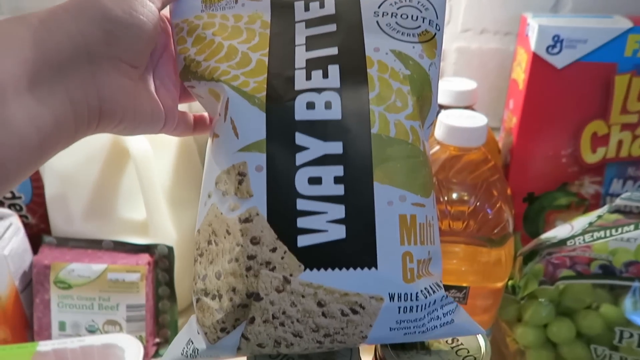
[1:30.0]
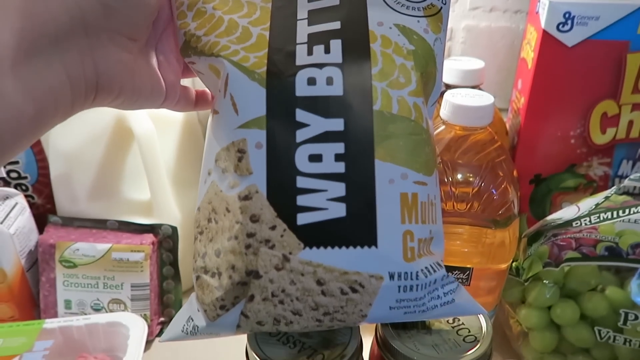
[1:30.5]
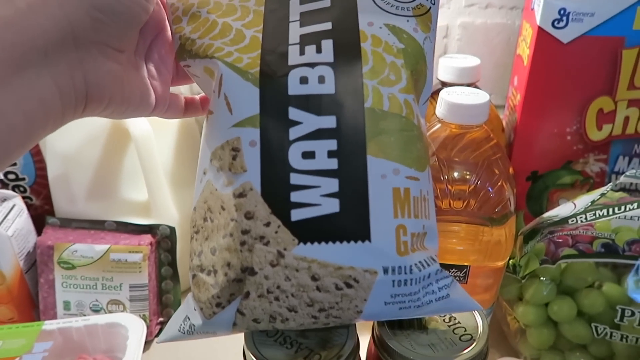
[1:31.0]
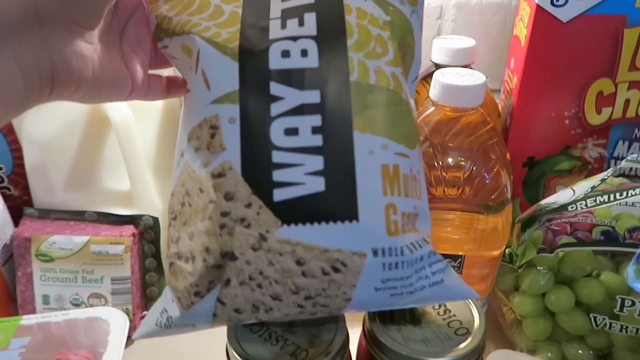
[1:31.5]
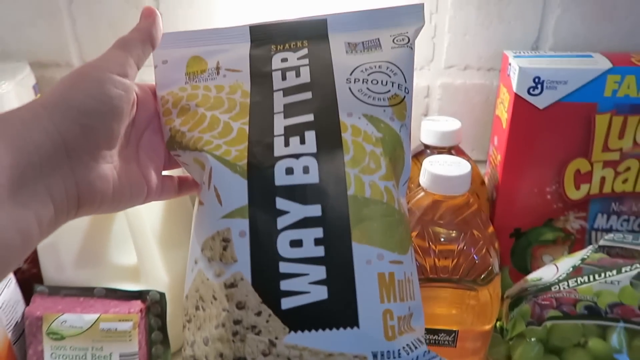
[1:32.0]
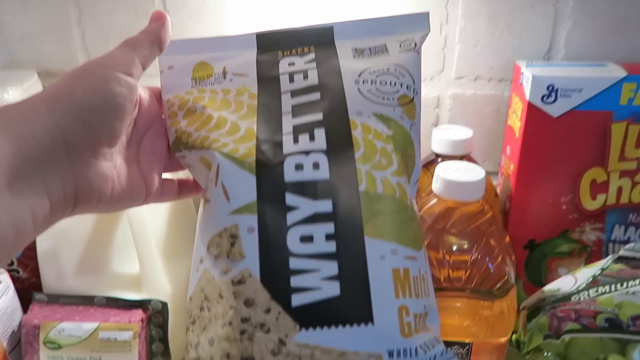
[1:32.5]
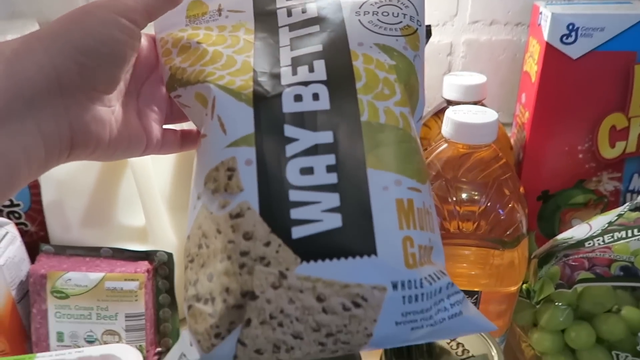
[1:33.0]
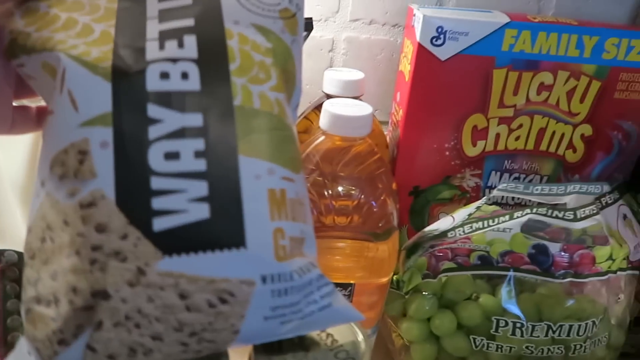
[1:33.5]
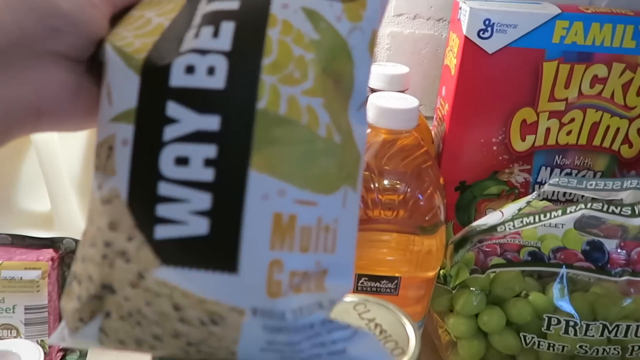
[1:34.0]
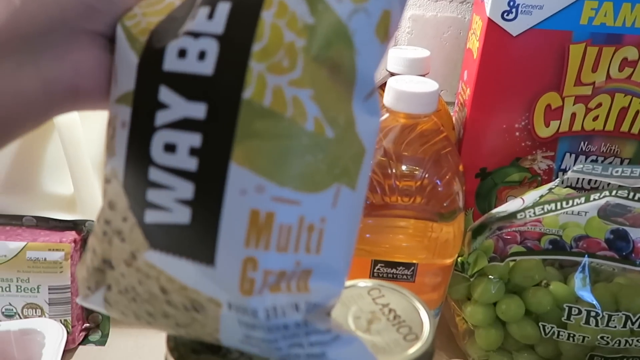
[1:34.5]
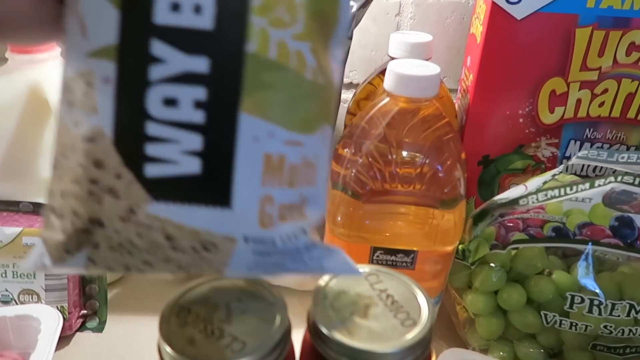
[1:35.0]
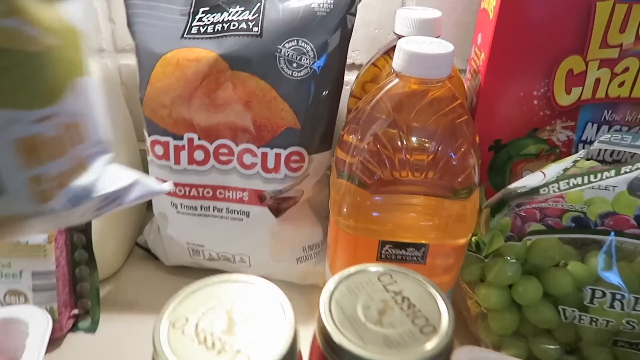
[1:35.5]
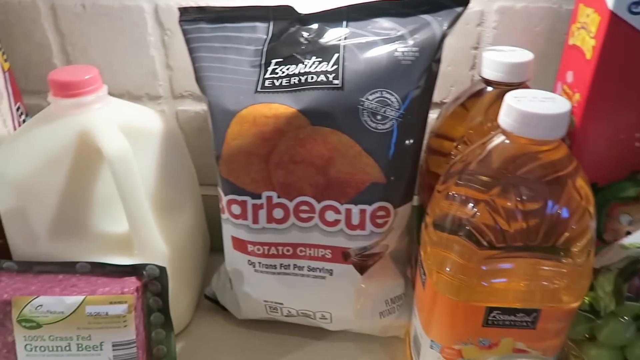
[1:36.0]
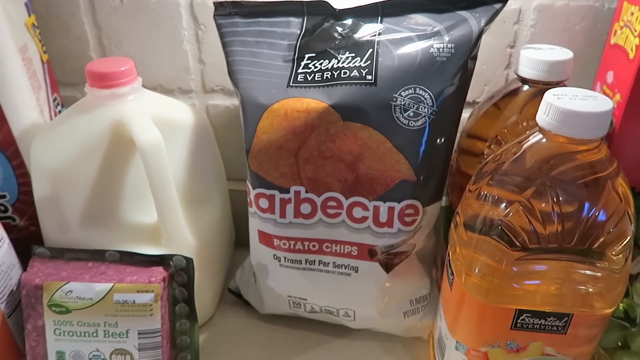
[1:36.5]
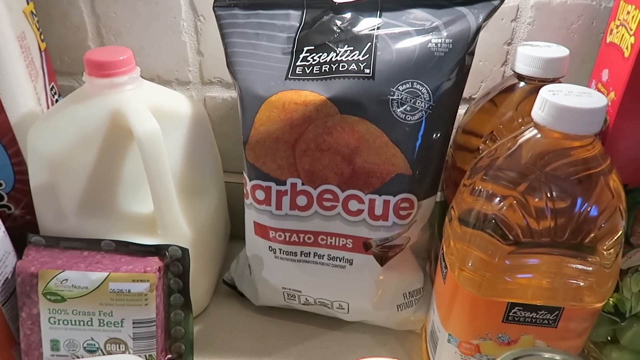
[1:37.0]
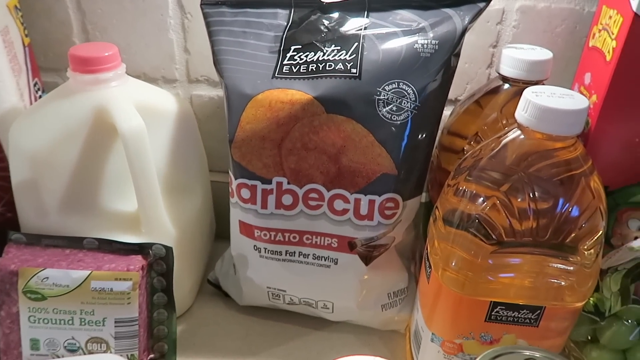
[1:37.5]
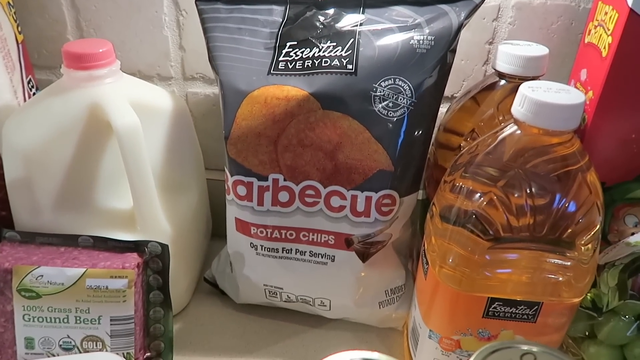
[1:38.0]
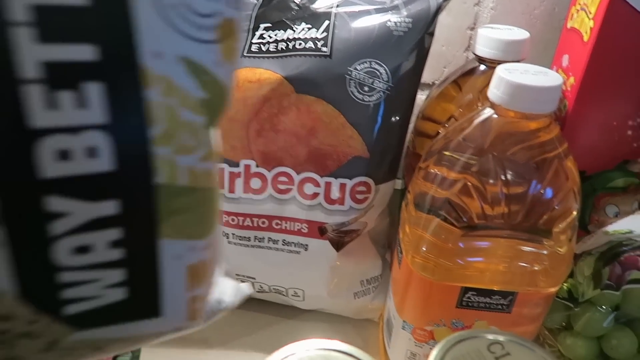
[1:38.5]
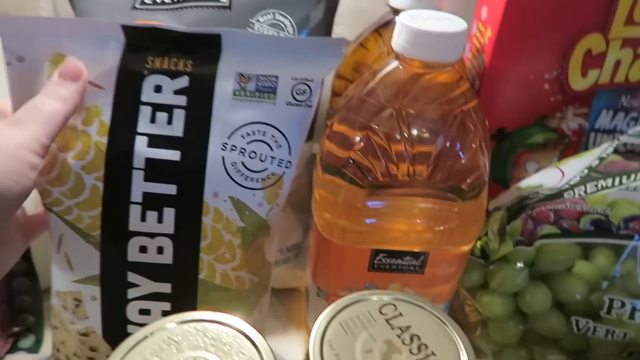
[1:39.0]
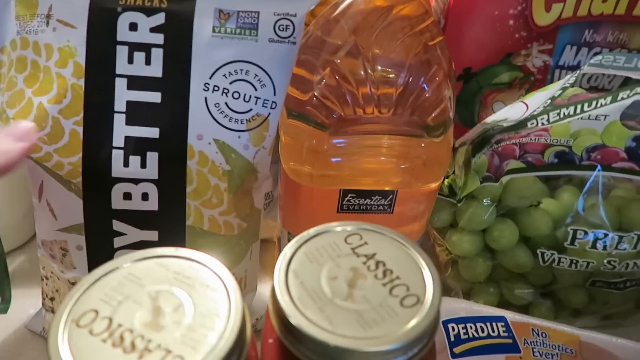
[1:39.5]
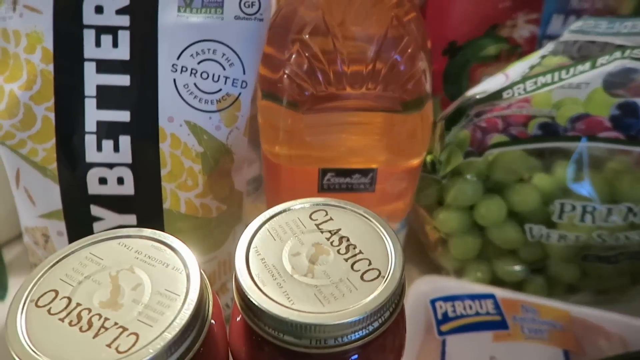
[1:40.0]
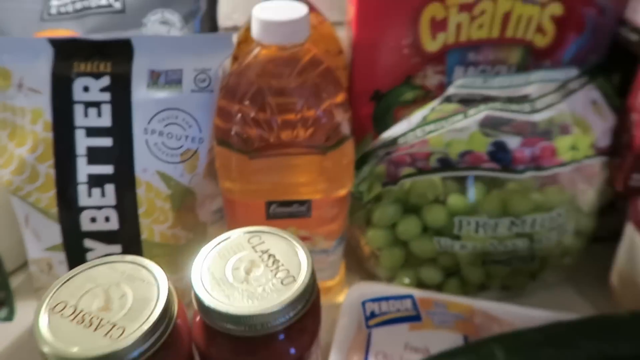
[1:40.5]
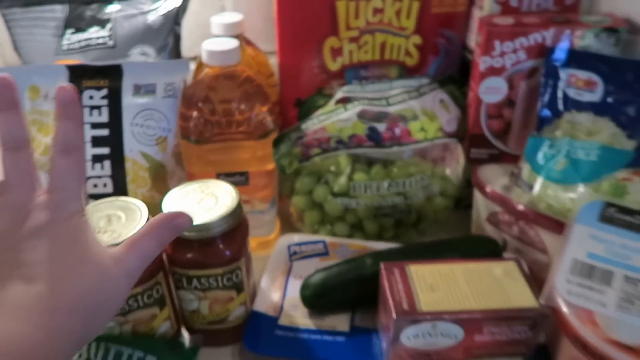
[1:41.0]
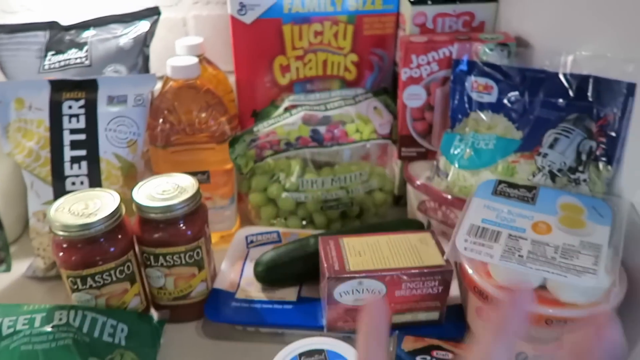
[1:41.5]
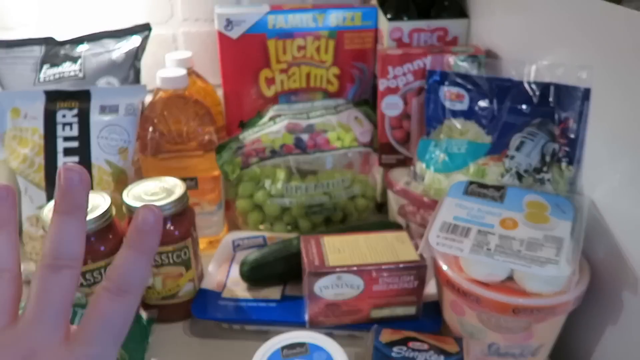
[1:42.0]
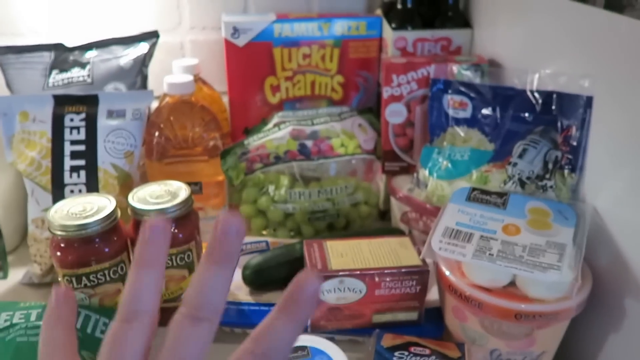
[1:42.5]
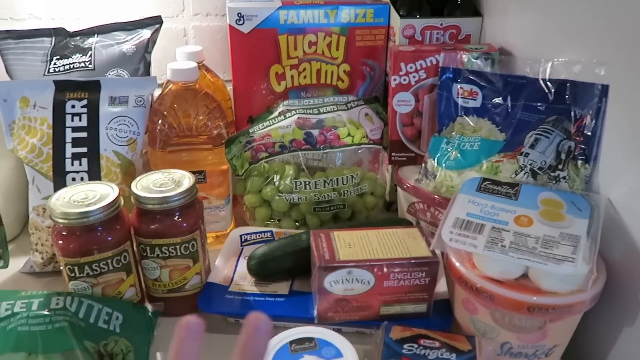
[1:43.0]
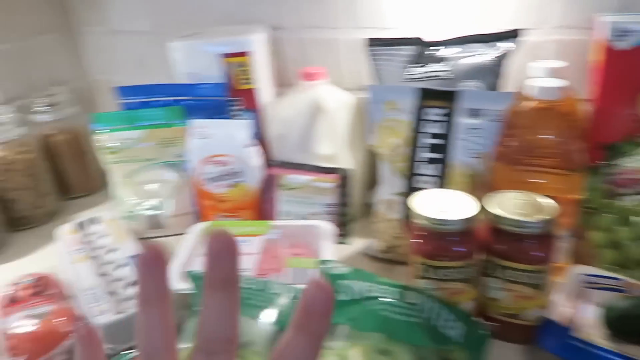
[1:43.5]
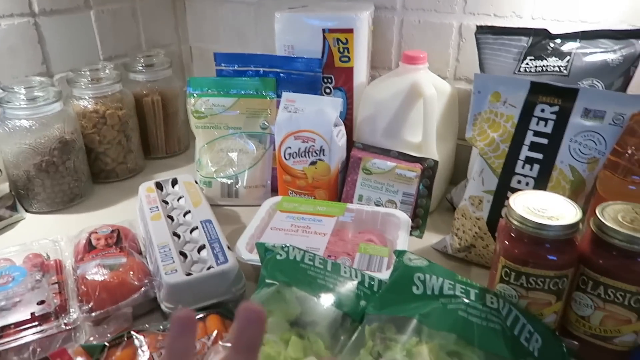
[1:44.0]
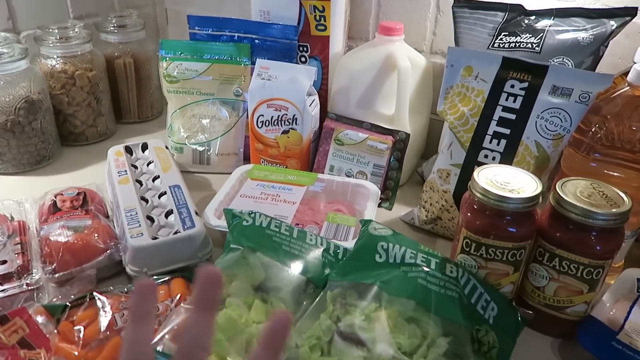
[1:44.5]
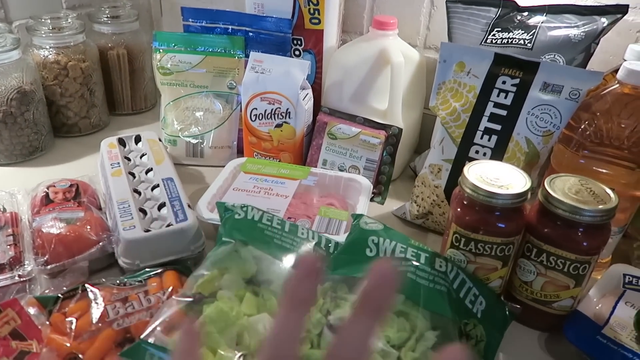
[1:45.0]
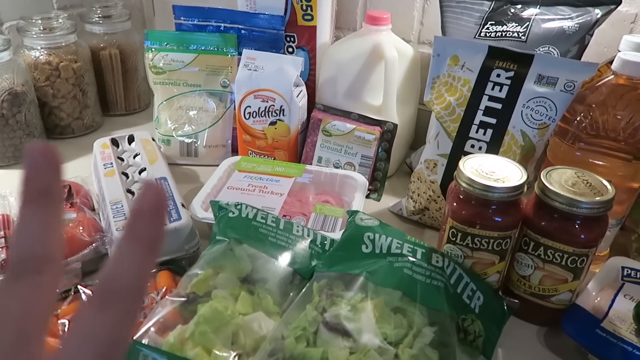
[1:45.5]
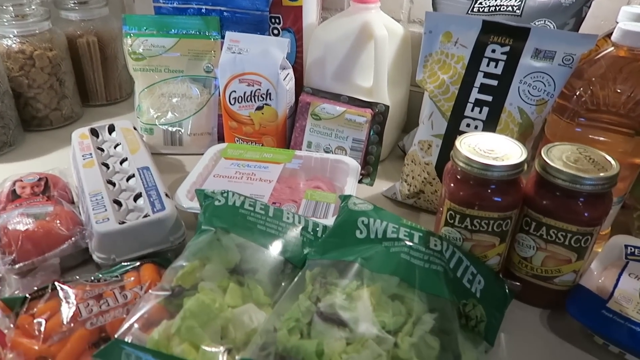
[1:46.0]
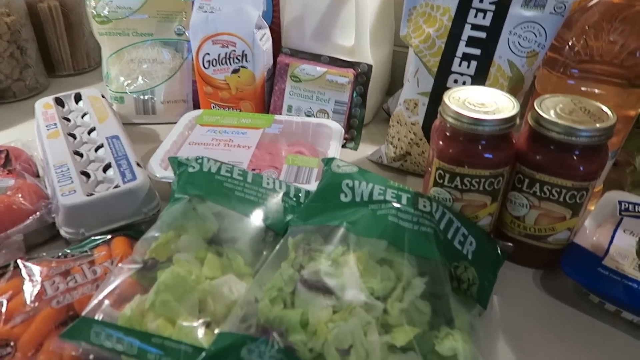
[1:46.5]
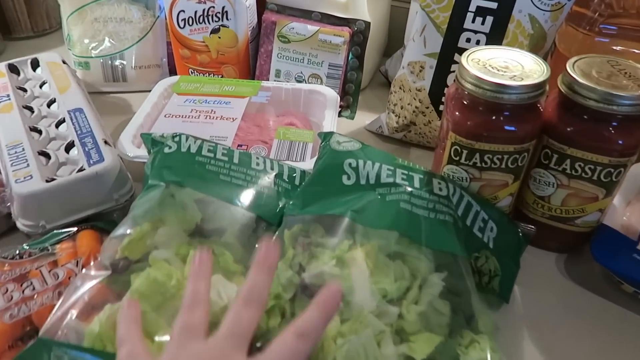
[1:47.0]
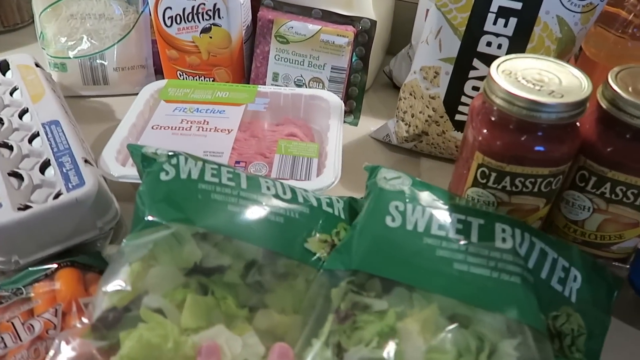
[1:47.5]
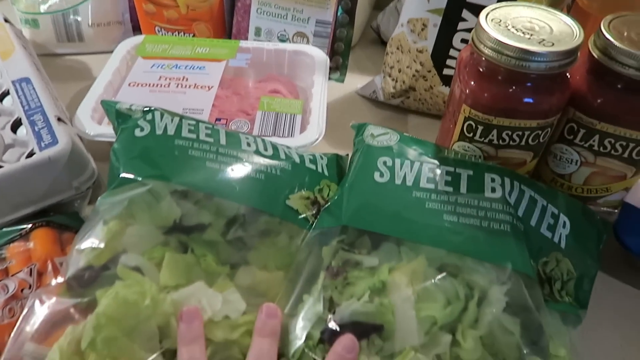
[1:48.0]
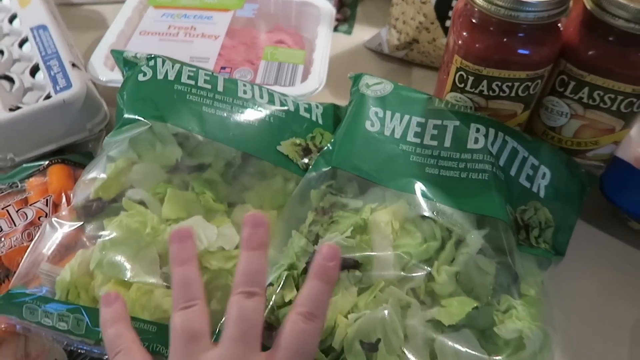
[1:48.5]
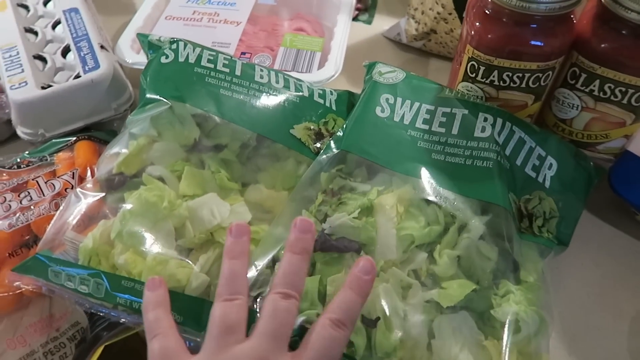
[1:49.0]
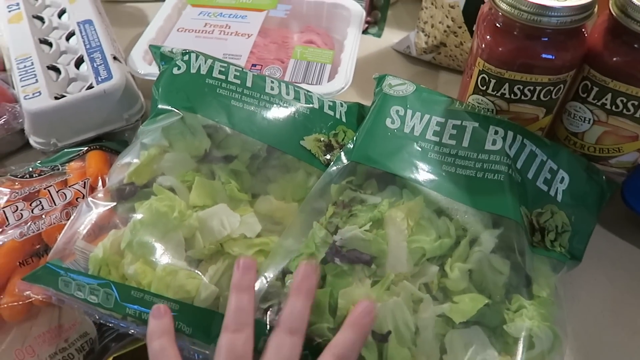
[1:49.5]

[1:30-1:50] The camera stays on the crackers for some time before moving to the potato chips behind them, which are also from the essential everyday range, in barbecue flavour. The hand points, and the camera focuses more on the right-hand side of the groceries, the items already shown. The camera then pans to the left-hand side and focuses on two bags of sweet butter lettuce, which the hand taps with fingers splayed out. It is pre-prepared lettuce that has already been chopped; some of the leaves look a darker, reddish colour, but most are pale green. Also on this side of the counter are corned beef, milk, eggs, turkey and various other things.